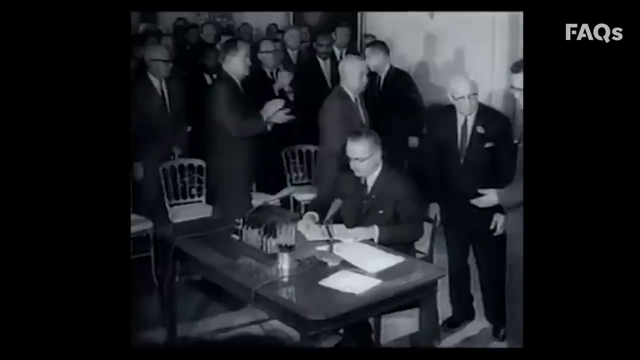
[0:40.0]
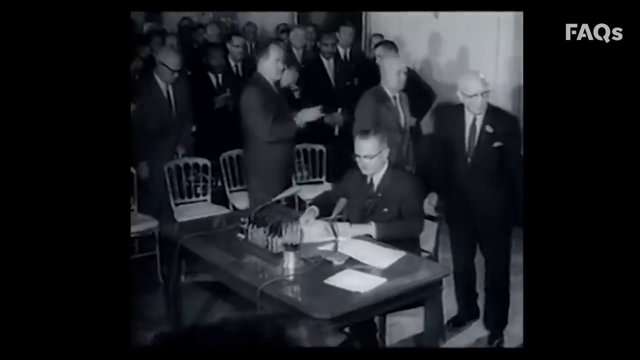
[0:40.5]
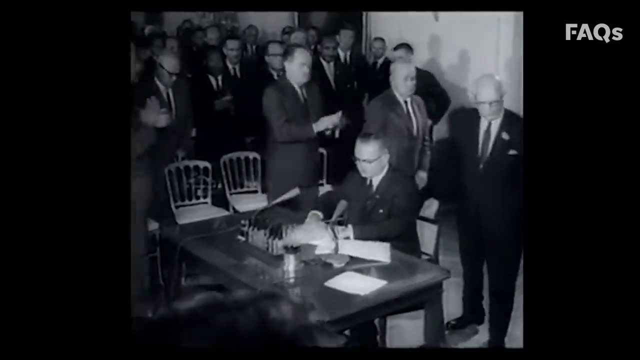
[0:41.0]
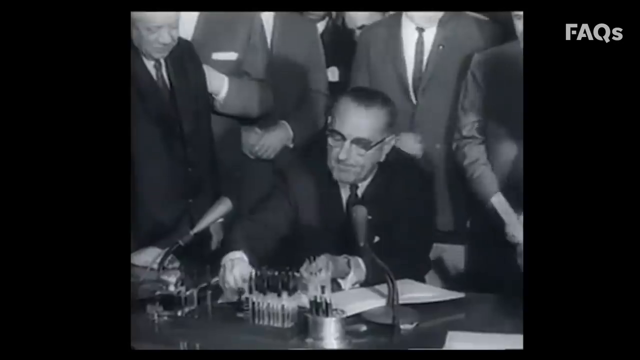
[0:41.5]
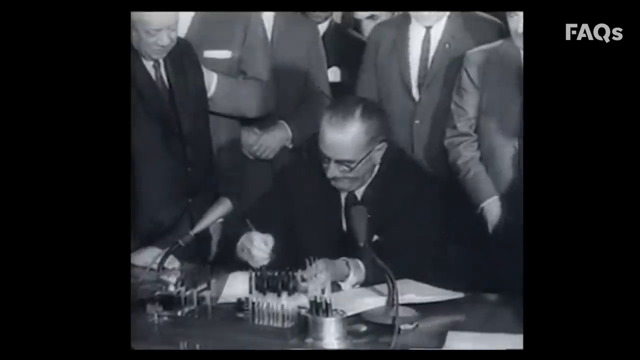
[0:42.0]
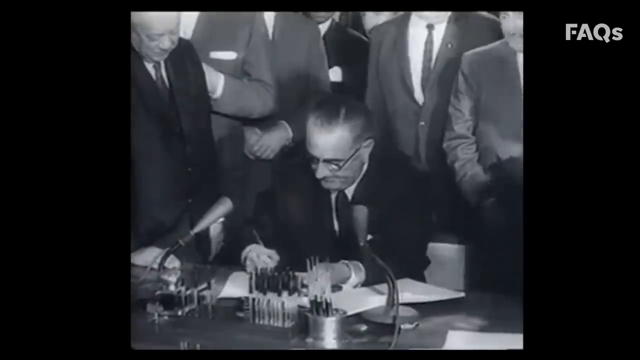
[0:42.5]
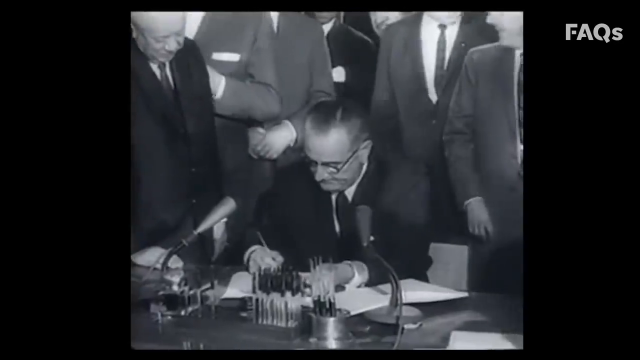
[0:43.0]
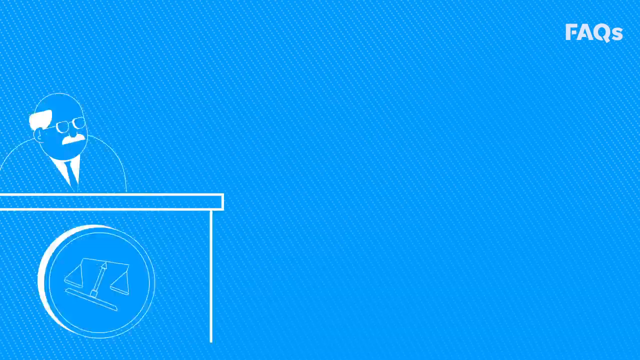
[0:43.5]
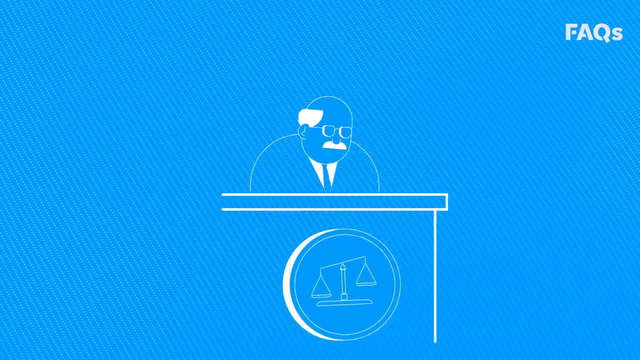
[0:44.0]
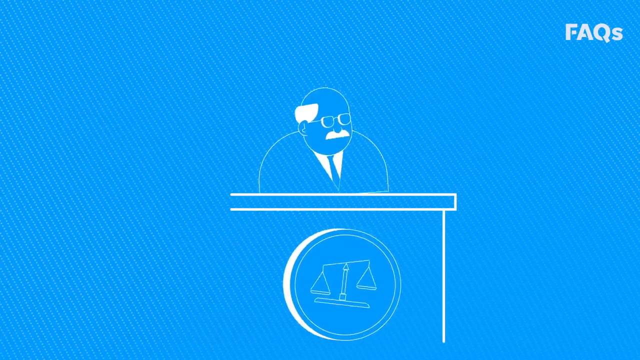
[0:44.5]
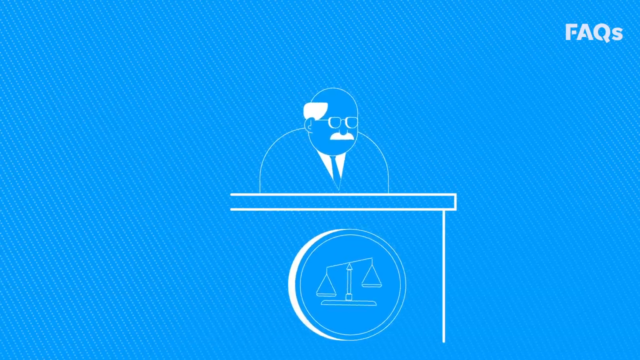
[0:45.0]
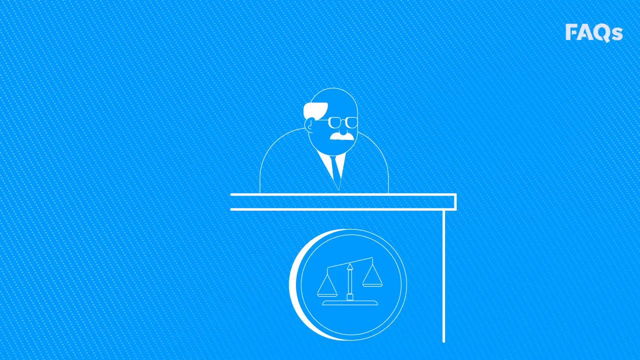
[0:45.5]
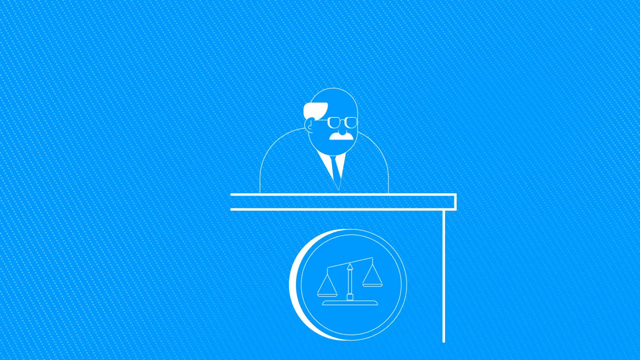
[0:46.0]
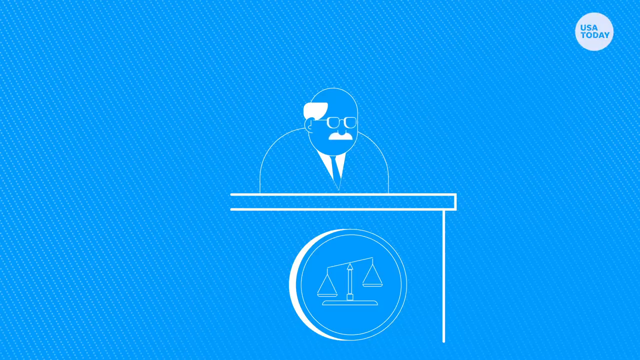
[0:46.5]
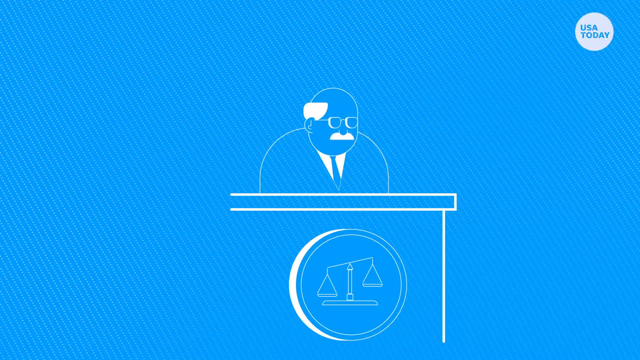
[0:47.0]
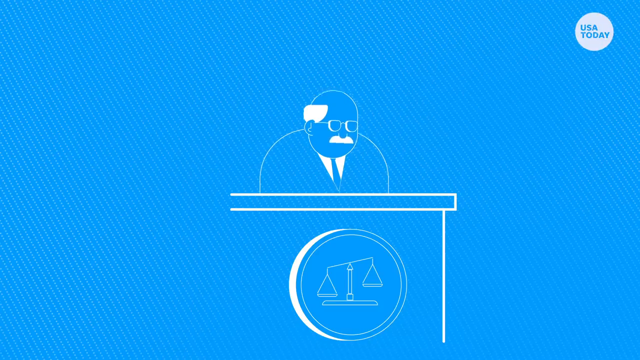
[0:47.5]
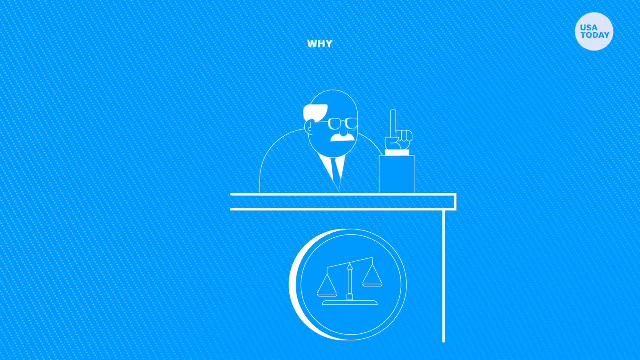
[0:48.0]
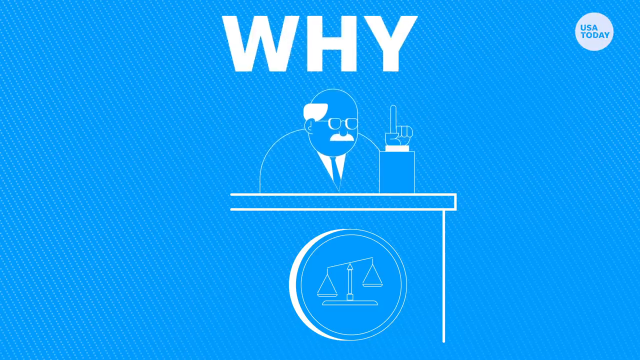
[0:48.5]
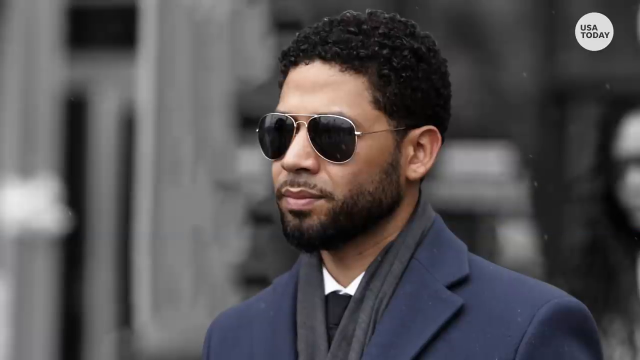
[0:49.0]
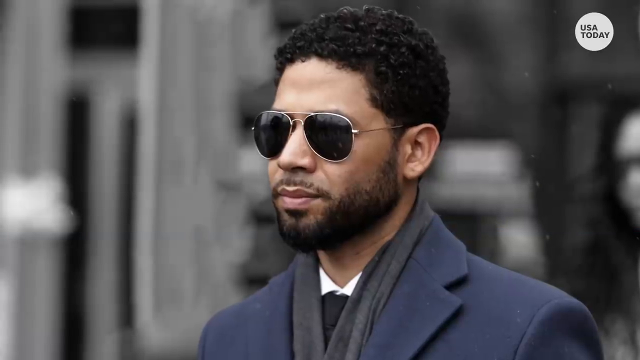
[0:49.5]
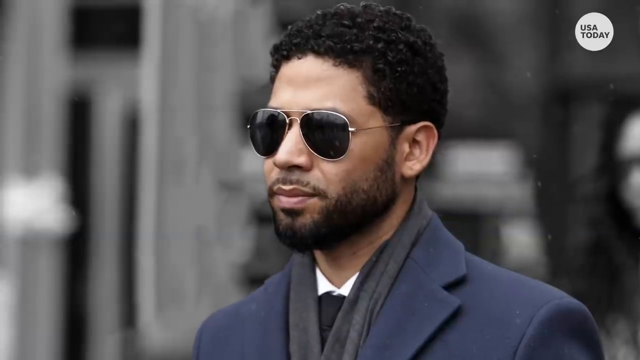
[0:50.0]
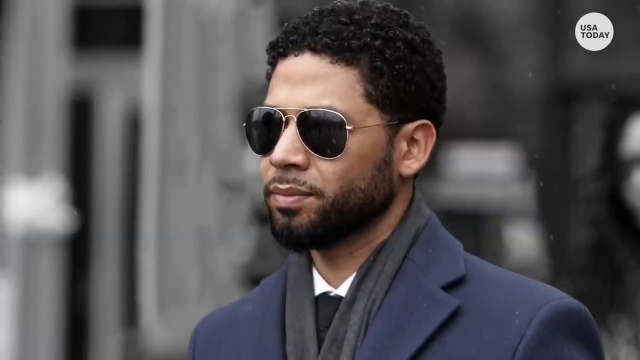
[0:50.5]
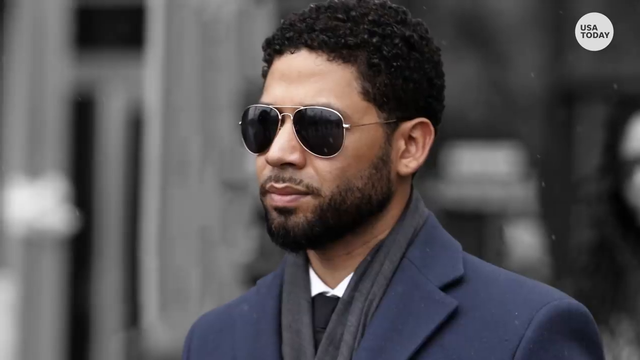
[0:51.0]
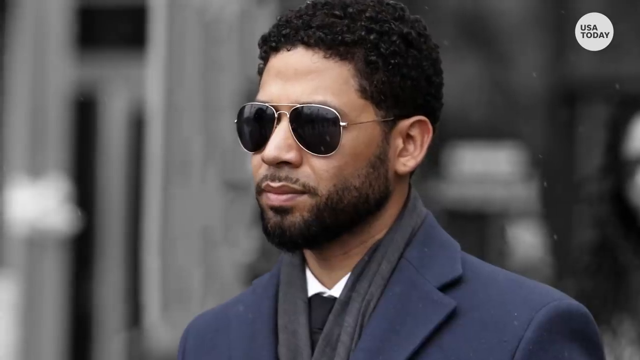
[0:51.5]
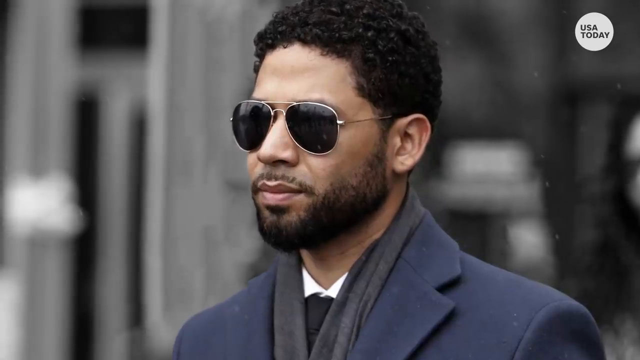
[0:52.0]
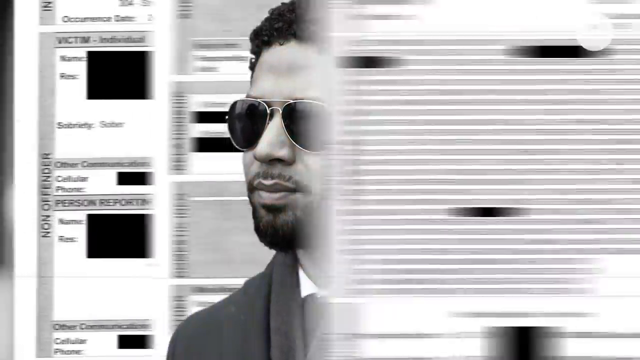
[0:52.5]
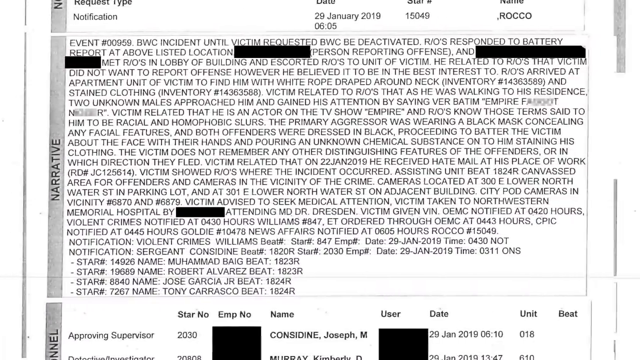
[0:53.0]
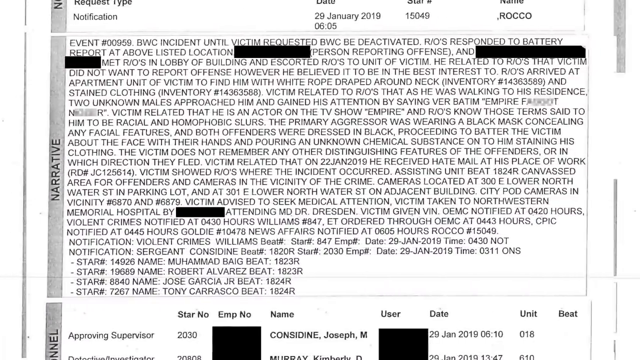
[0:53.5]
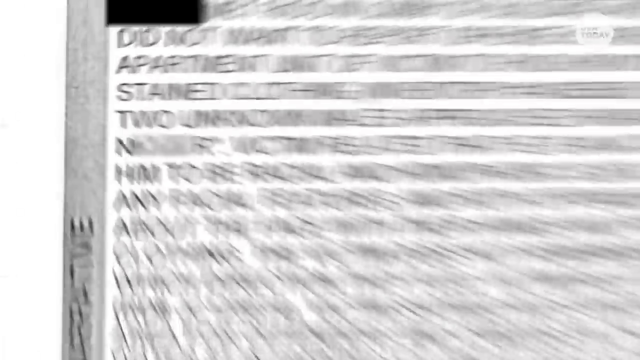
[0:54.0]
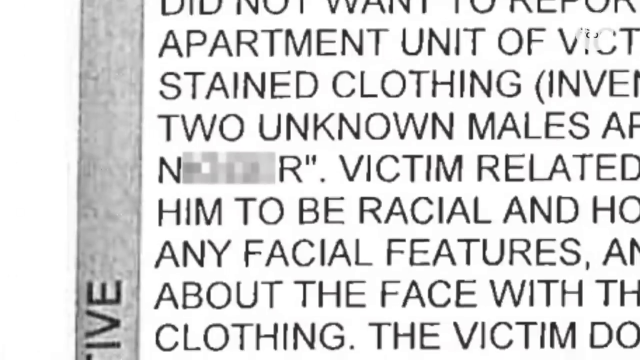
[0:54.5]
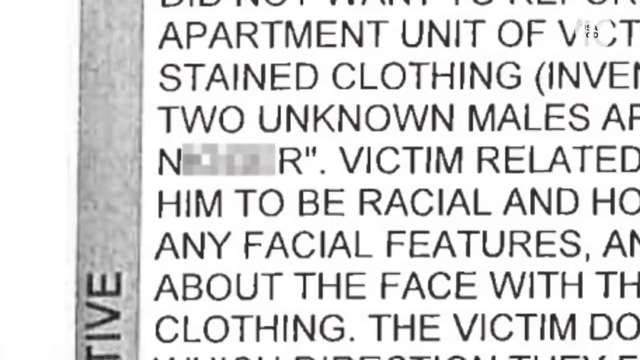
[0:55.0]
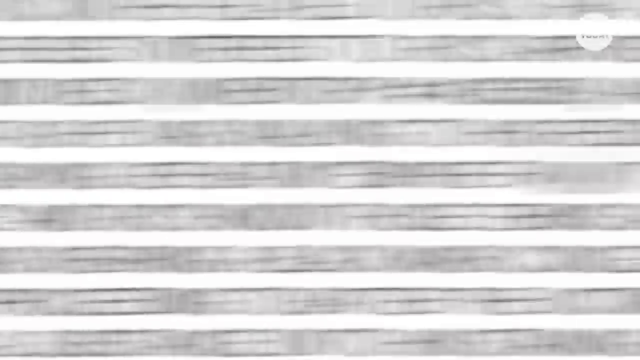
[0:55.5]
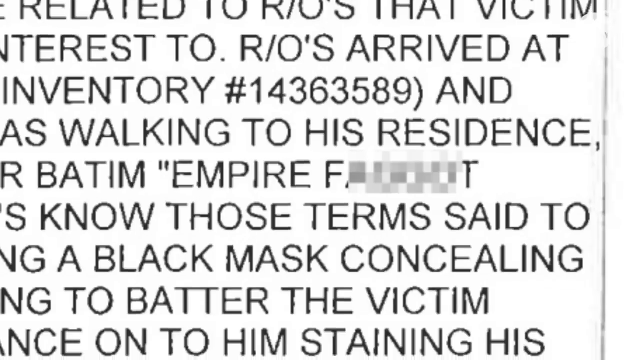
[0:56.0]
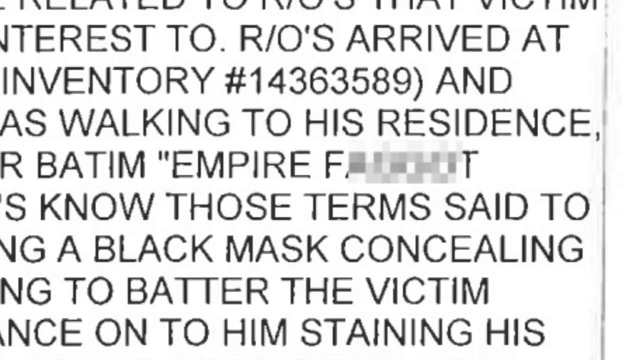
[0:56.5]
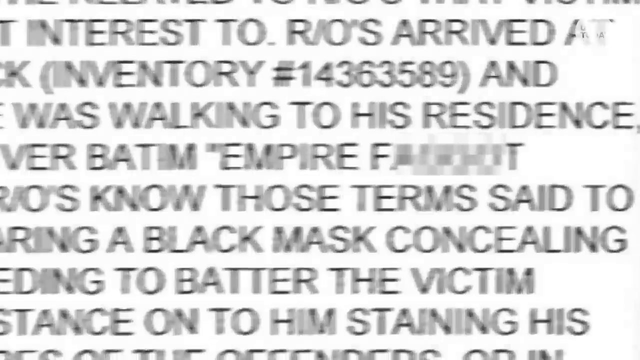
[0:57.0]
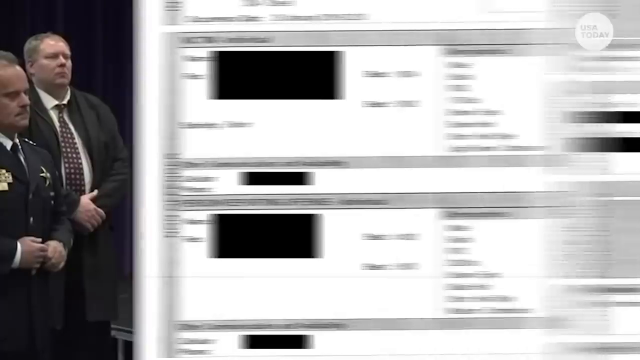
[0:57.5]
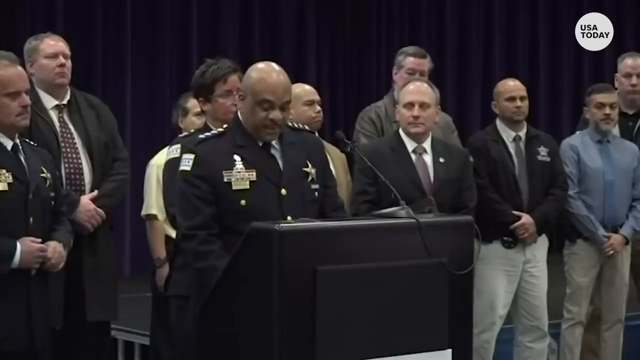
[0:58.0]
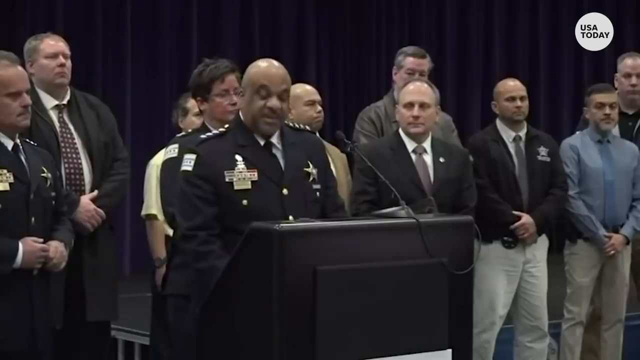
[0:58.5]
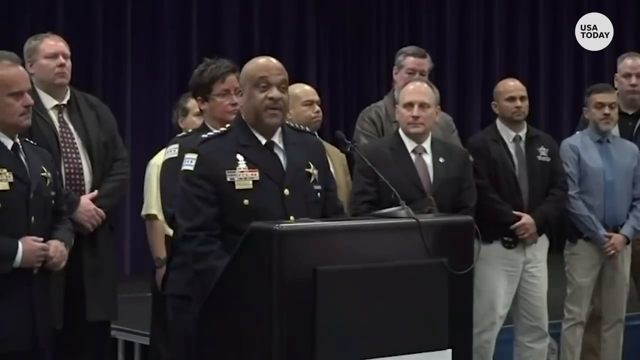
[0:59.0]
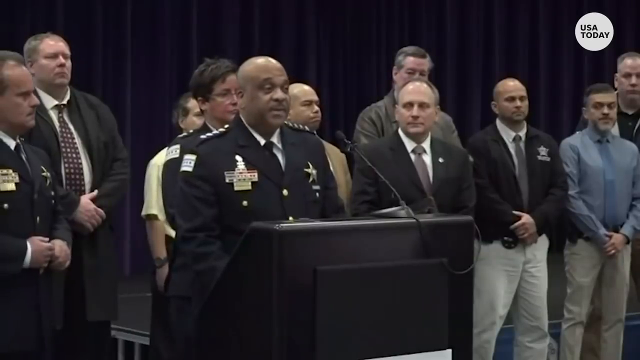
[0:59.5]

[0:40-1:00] Old footage shows white men, all formally dressed, at an event that seems to involve the signing of important papers. As the papers are signed, people in the background cheer and clap, seeming quite happy. The video transitions to a young black man, formally dressed and wearing shades, with what appears to be a high-rise building in the background; he looks focused ahead. Next is what appears to be a police incident report dated 29 January 2019. Parts of the report are redacted, and the video focuses on particular sections, which mention two unknown males. The video then shows a senior police officer, a man in uniform, giving a speech at a press conference, while other men in the background look on with stern, serious faces.